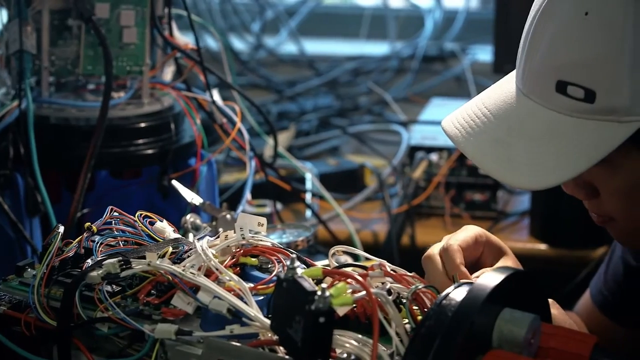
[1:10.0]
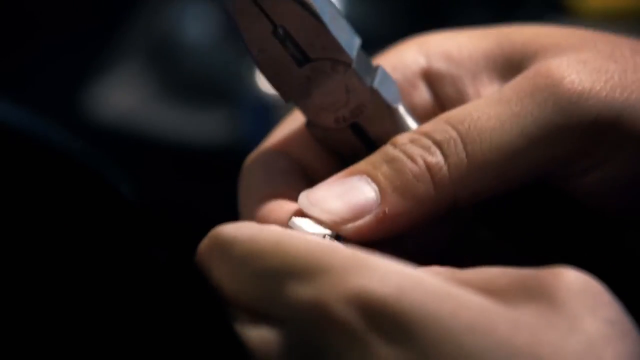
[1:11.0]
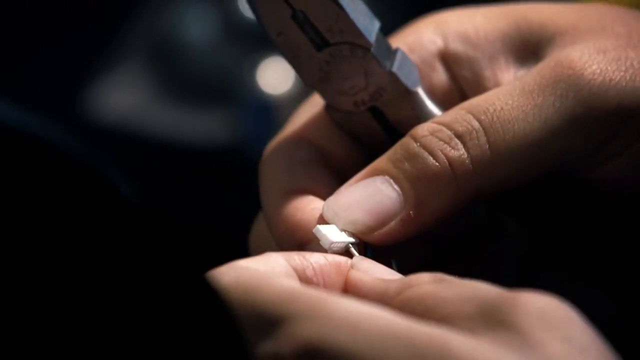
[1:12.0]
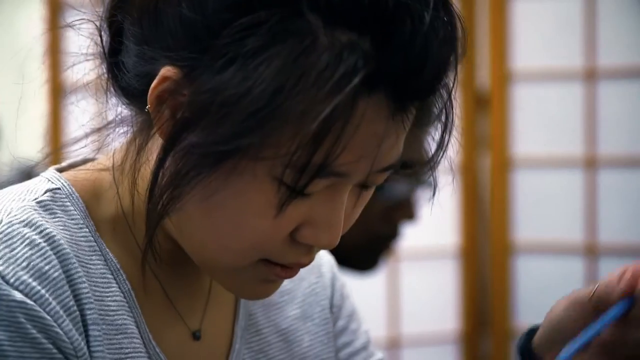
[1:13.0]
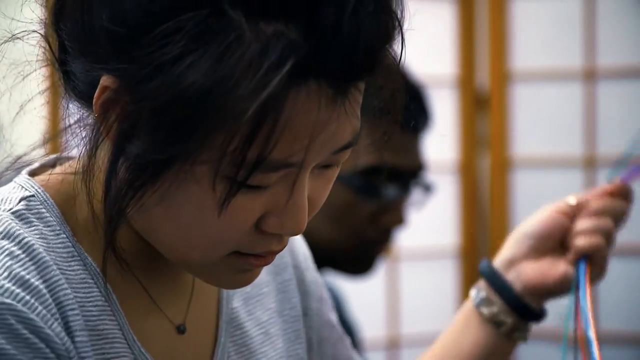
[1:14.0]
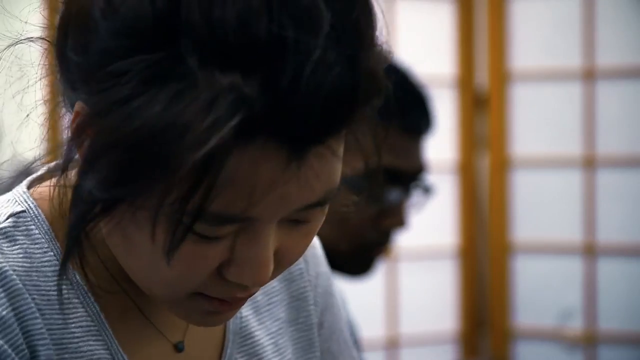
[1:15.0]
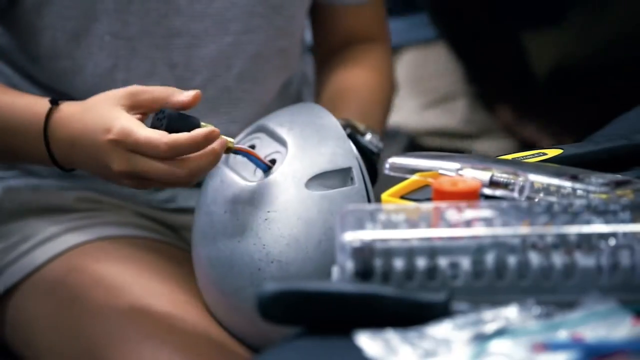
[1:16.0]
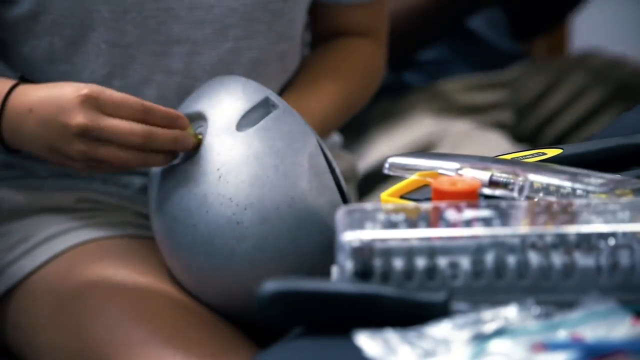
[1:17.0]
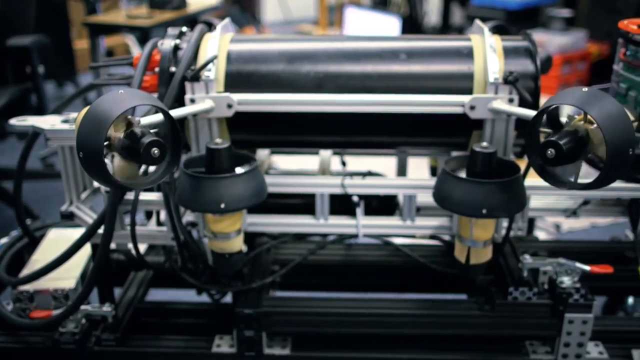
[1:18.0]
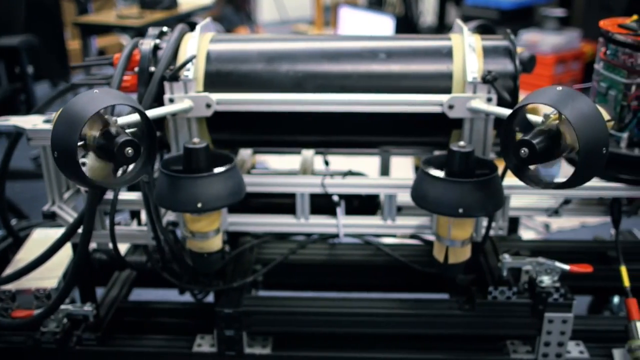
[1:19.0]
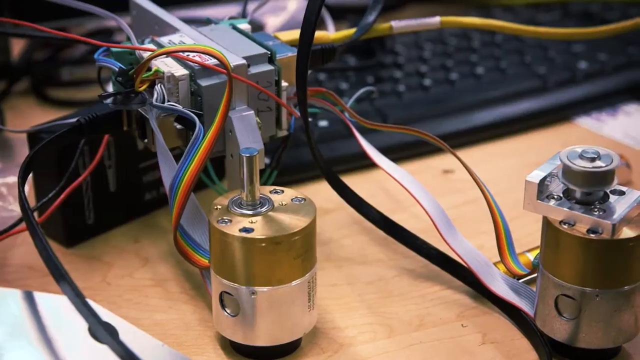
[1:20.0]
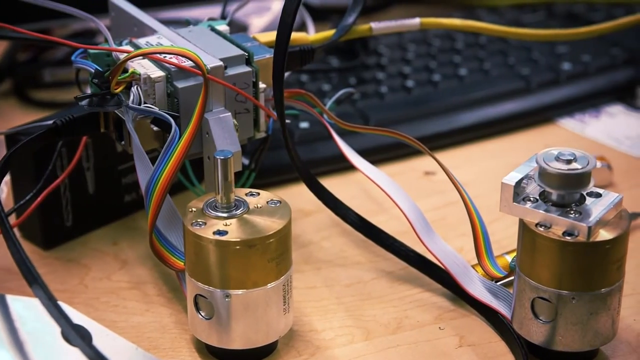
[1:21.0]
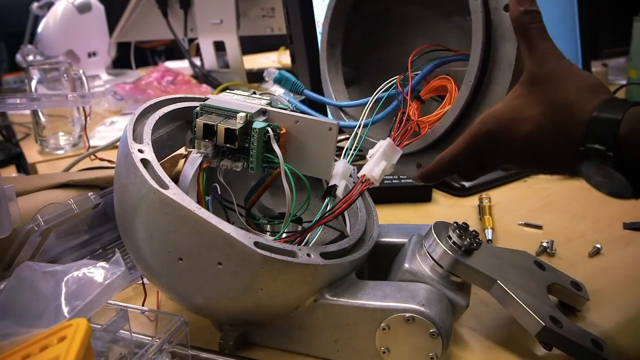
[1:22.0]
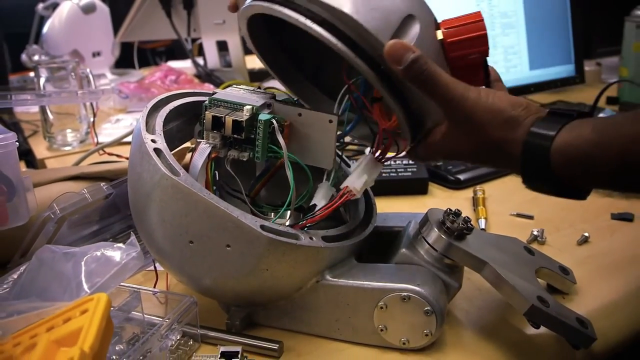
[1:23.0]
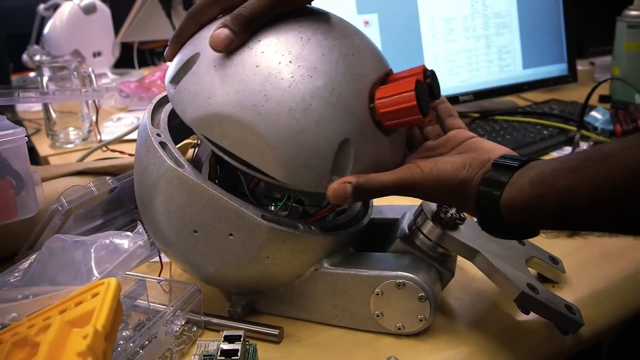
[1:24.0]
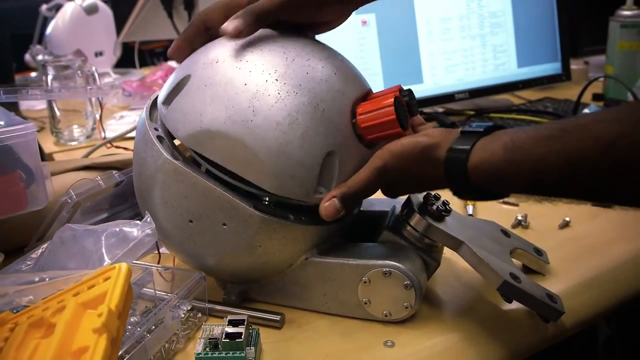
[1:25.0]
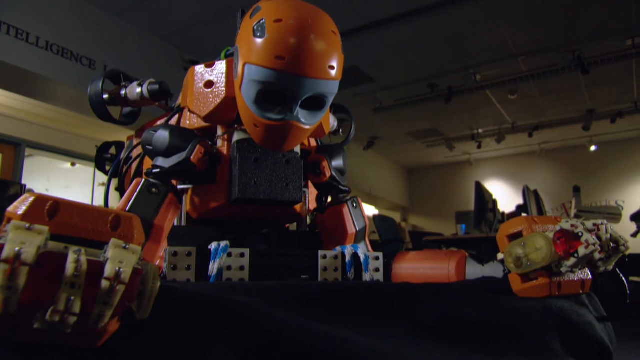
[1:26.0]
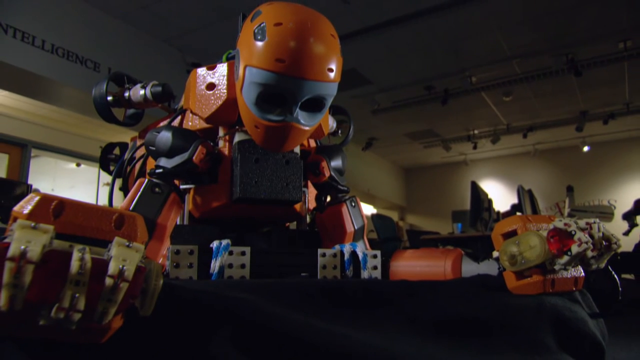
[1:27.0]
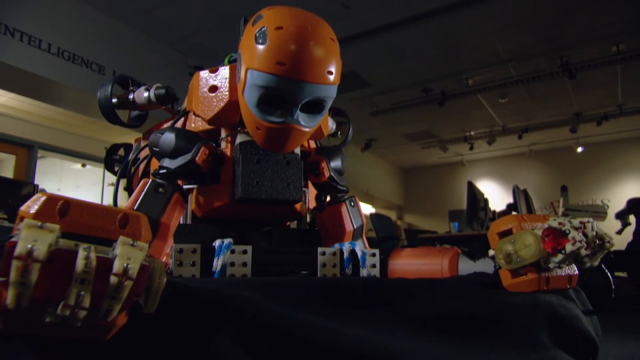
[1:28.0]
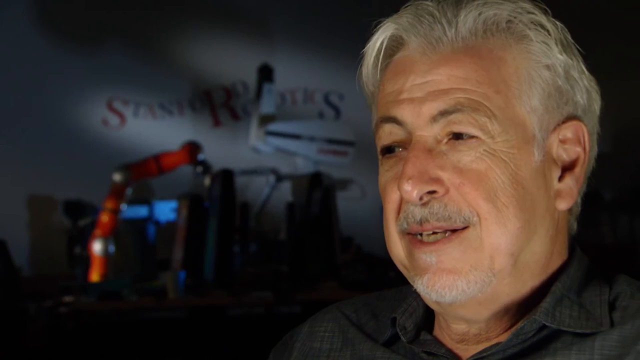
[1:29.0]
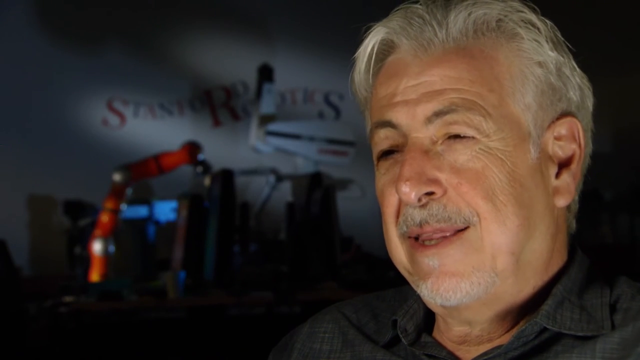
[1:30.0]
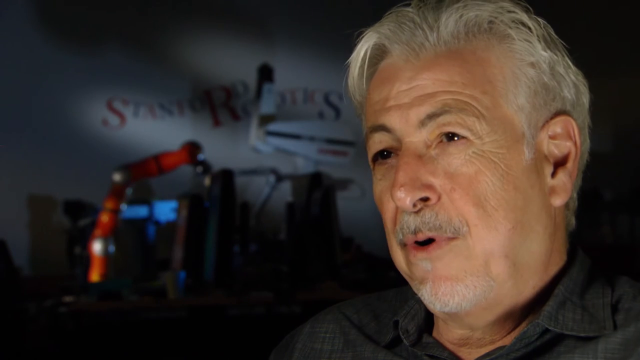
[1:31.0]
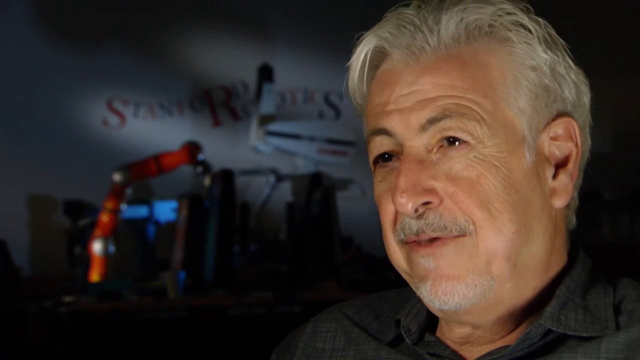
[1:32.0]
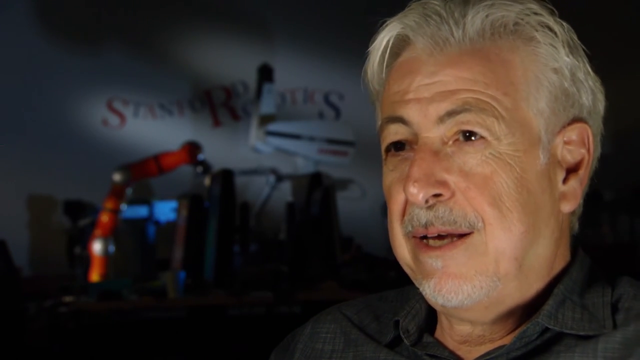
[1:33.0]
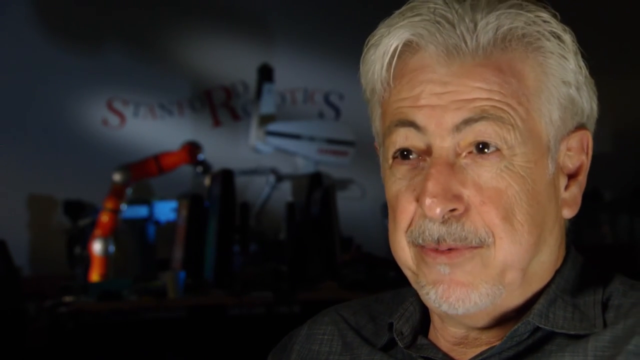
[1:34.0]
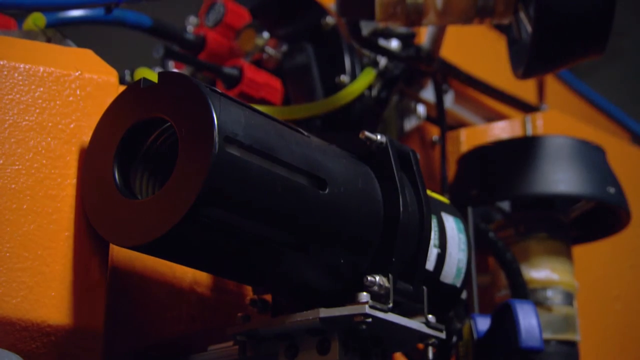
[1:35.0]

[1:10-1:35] Wires of different colors are woven into each other: white, blue and red wires, with some yellow caps and white caps. They seem to extend from each other and from other pieces of equipment in the background. Someone in a white baseball cap works intently on these wires, using pliers to move or manipulate them, and different cords are pulled through metallic pieces of the machinery or humanoid robot. Computer screens flash, and then there is another segment of the smiling elderly Caucasian man talking as though he is being interviewed about the robot. The scientists seem to be an Asian woman, an African-American man, and what looks to be a Caucasian man, or possibly someone of multiracial background.